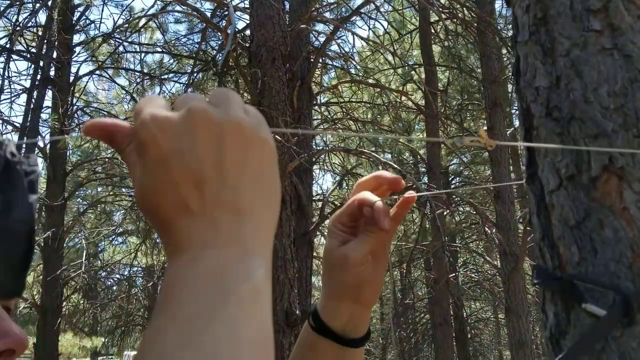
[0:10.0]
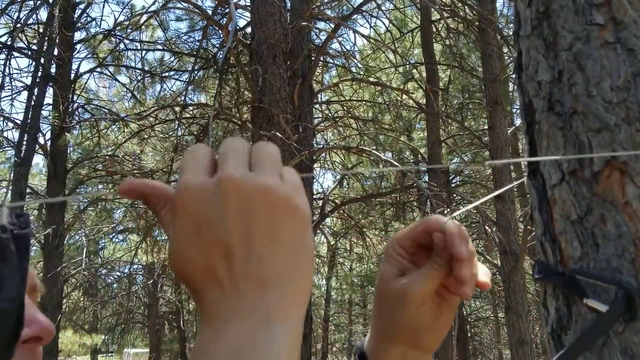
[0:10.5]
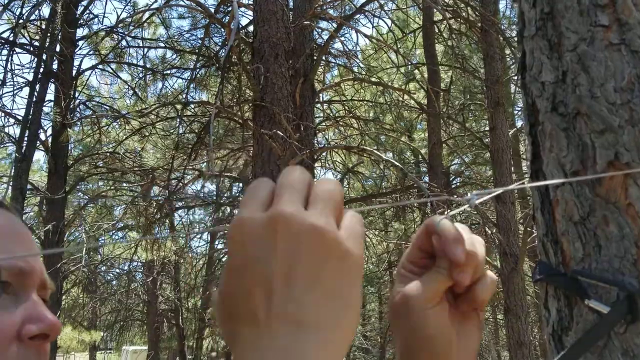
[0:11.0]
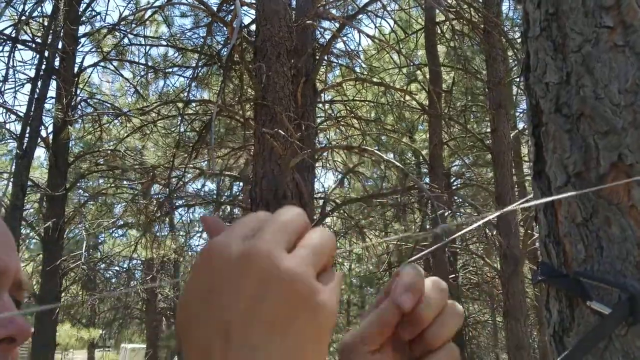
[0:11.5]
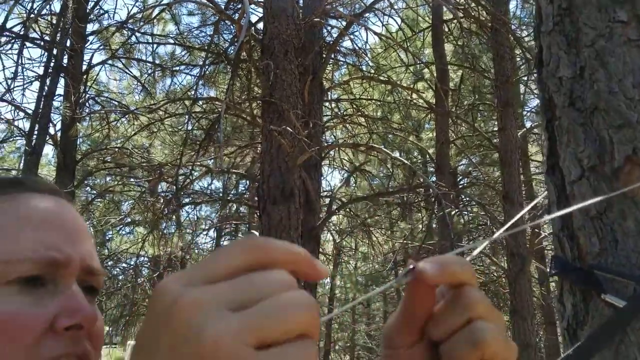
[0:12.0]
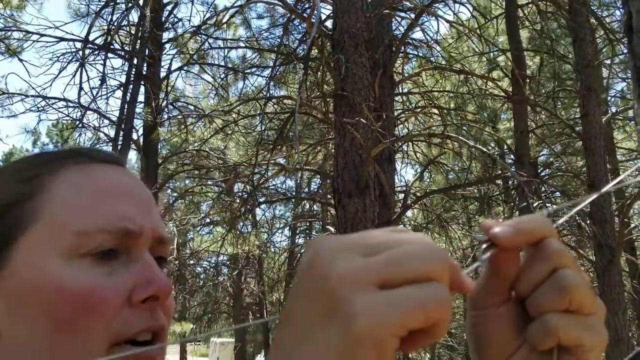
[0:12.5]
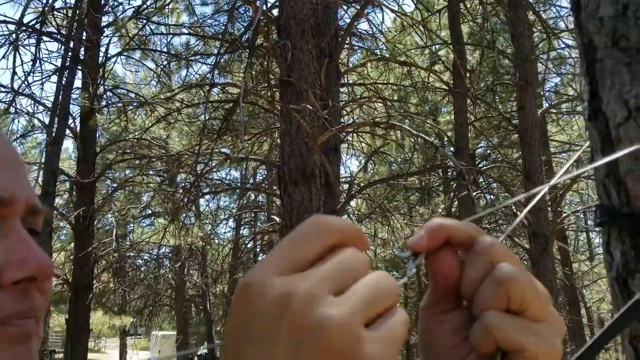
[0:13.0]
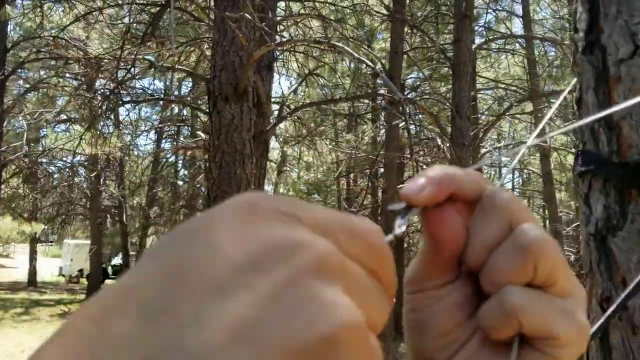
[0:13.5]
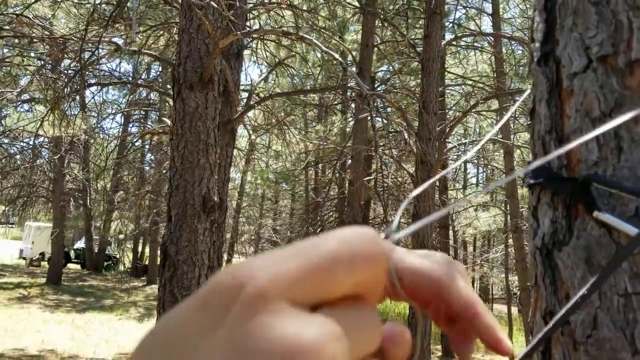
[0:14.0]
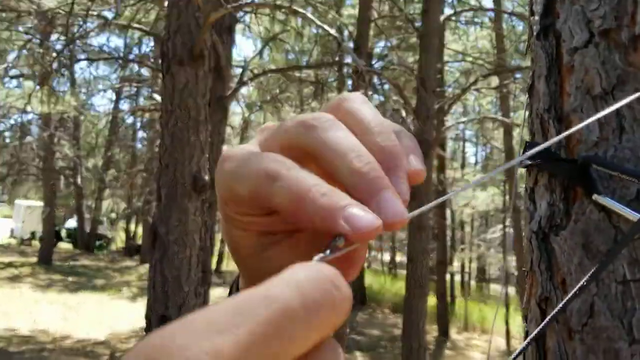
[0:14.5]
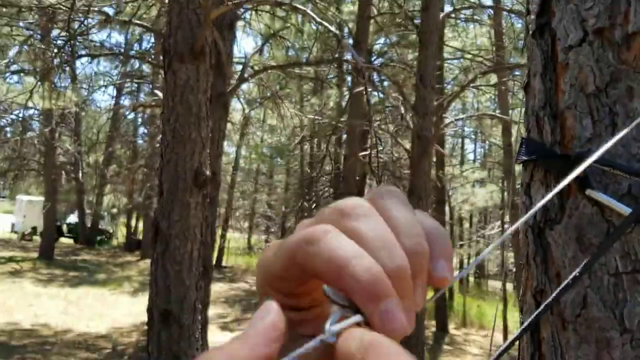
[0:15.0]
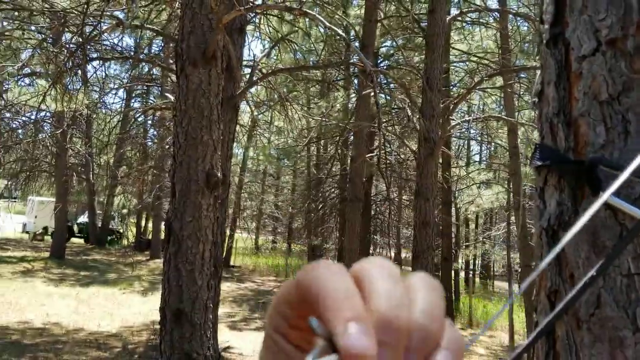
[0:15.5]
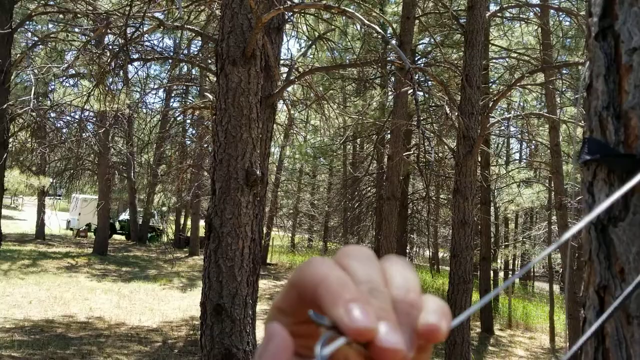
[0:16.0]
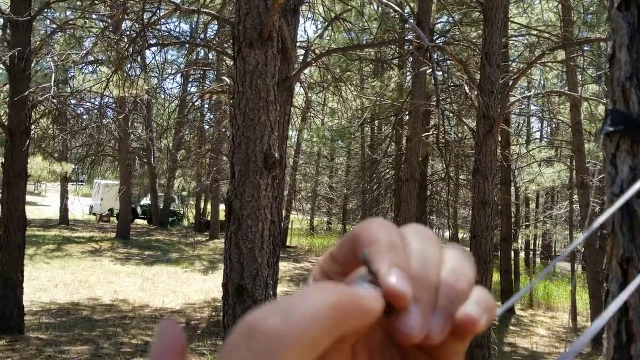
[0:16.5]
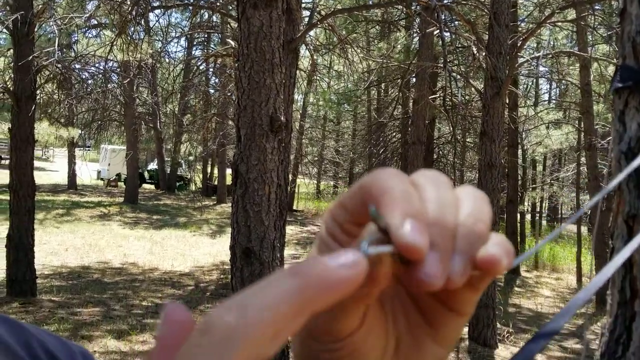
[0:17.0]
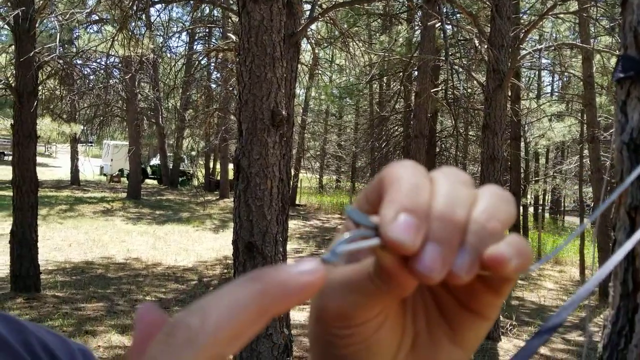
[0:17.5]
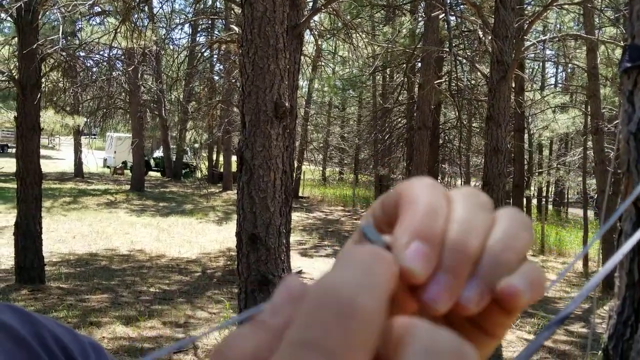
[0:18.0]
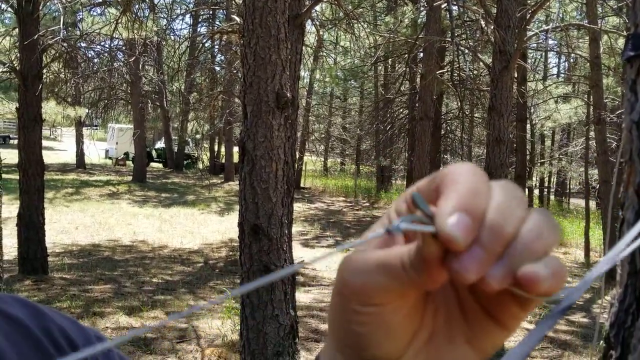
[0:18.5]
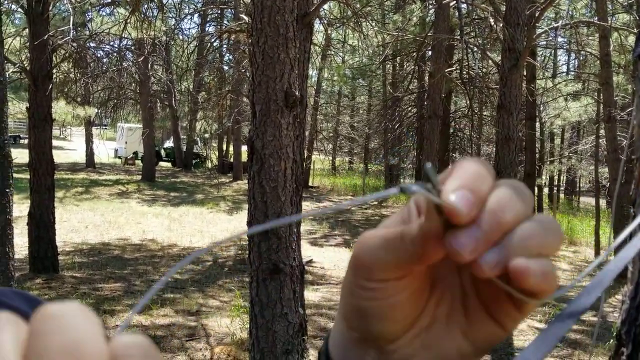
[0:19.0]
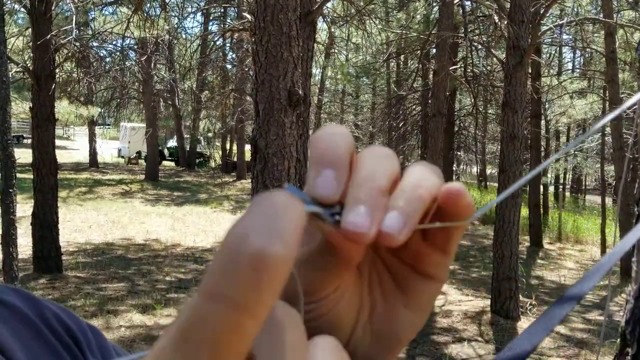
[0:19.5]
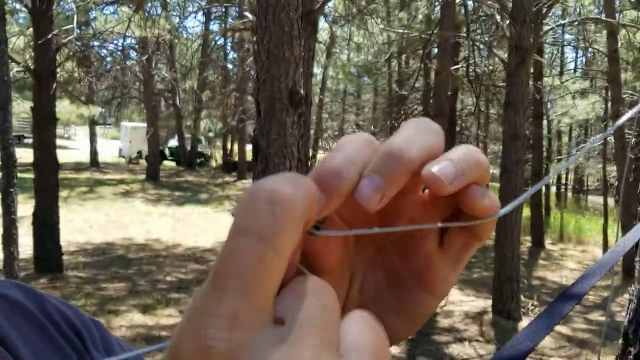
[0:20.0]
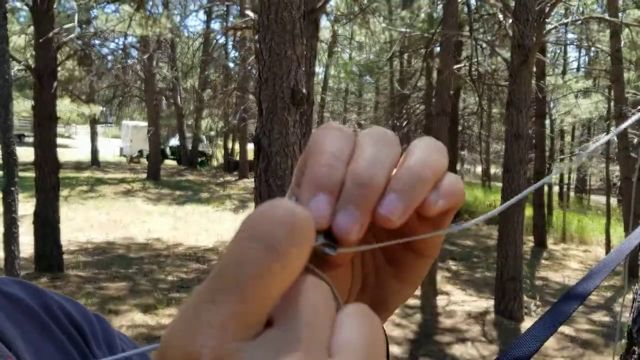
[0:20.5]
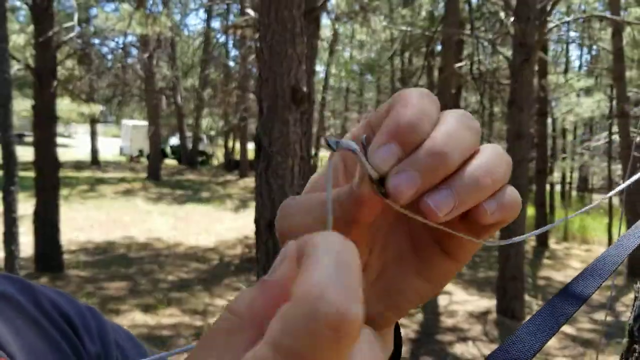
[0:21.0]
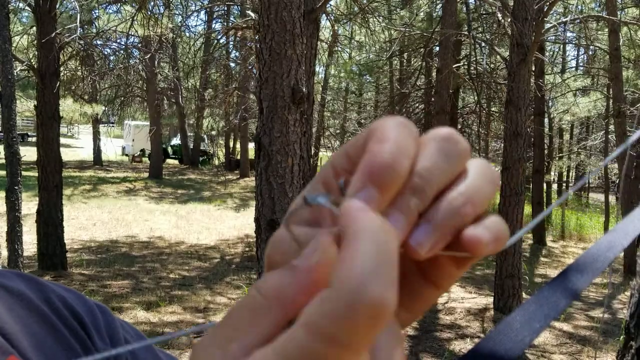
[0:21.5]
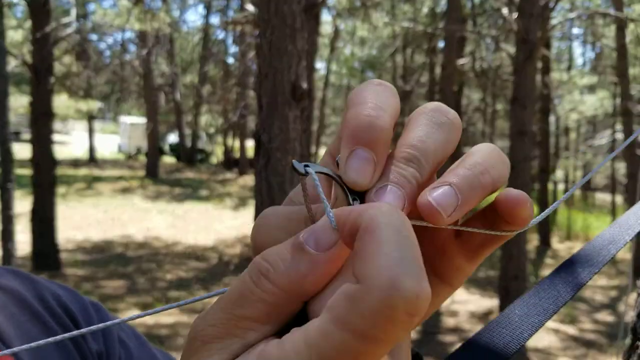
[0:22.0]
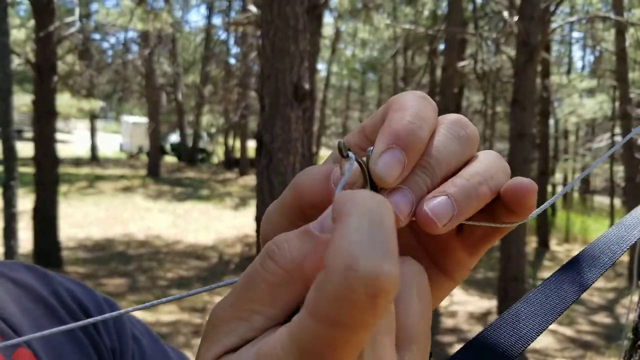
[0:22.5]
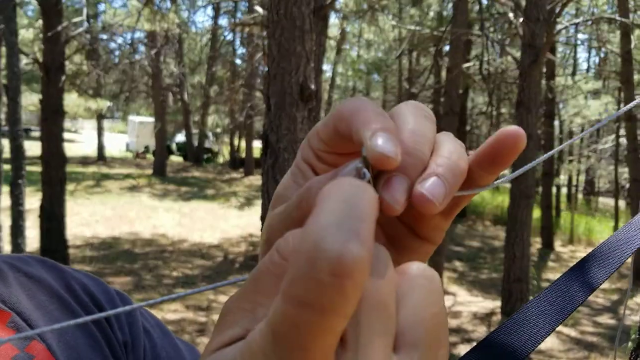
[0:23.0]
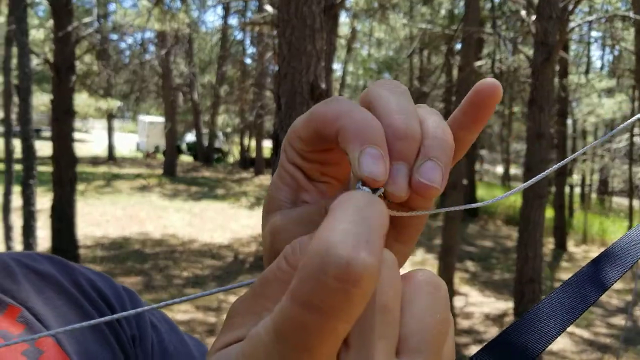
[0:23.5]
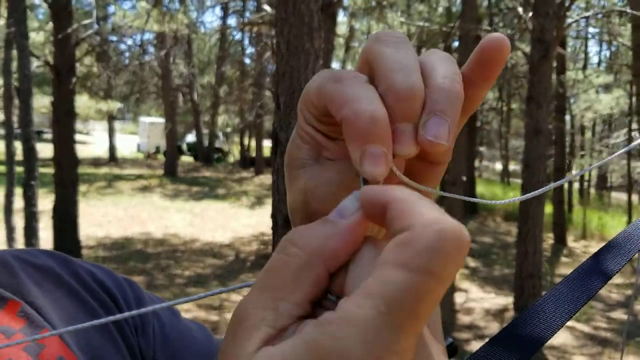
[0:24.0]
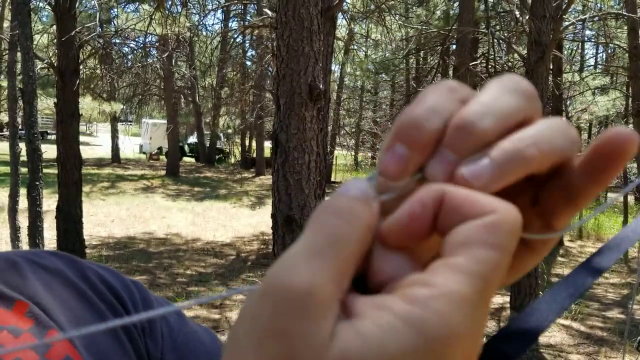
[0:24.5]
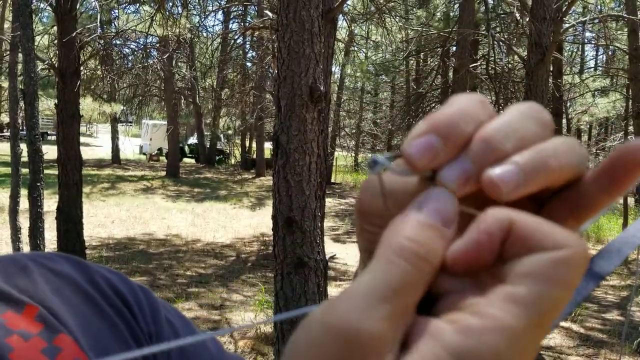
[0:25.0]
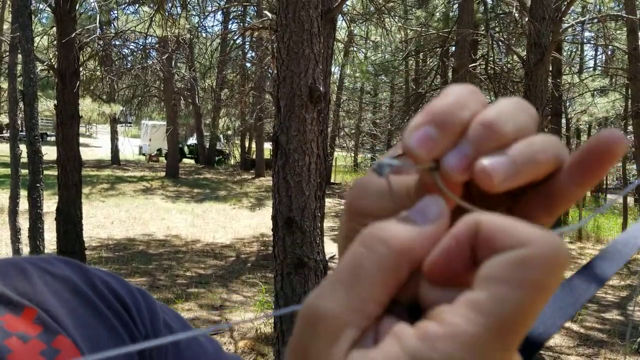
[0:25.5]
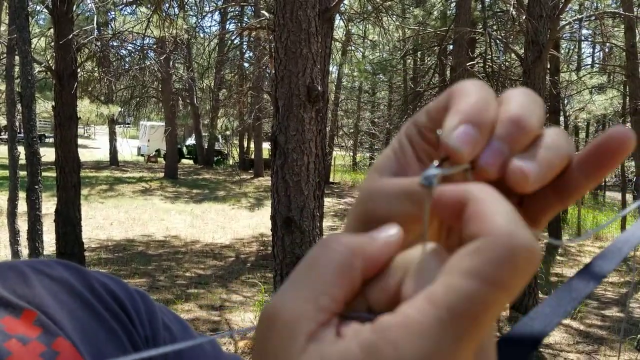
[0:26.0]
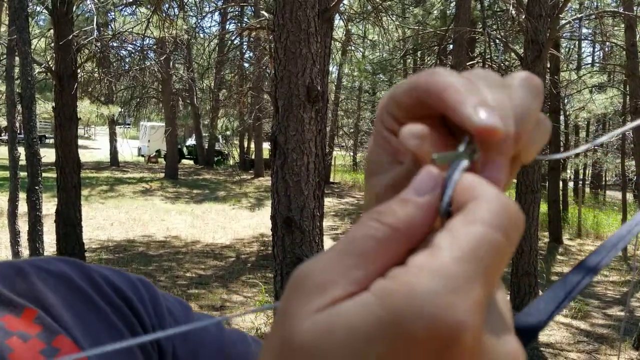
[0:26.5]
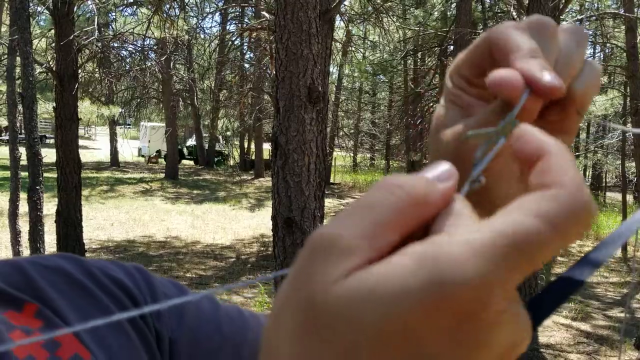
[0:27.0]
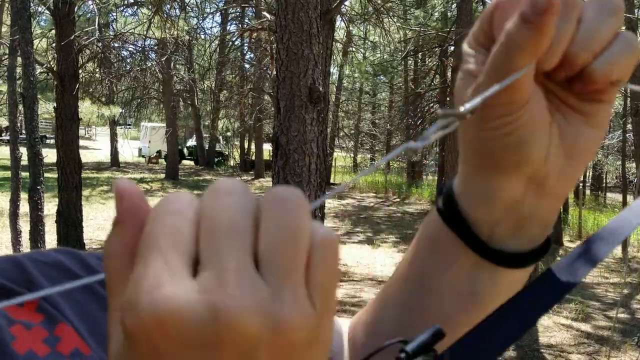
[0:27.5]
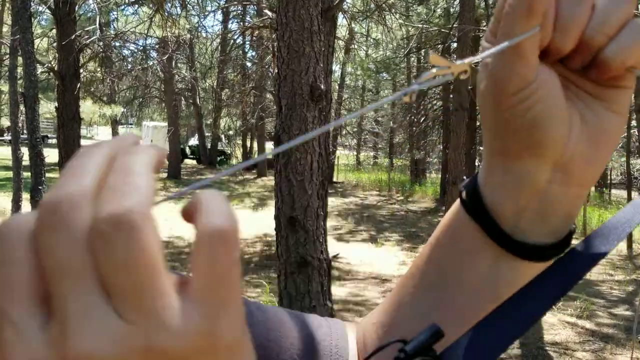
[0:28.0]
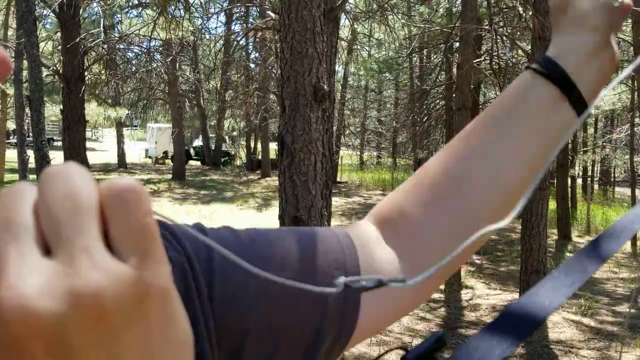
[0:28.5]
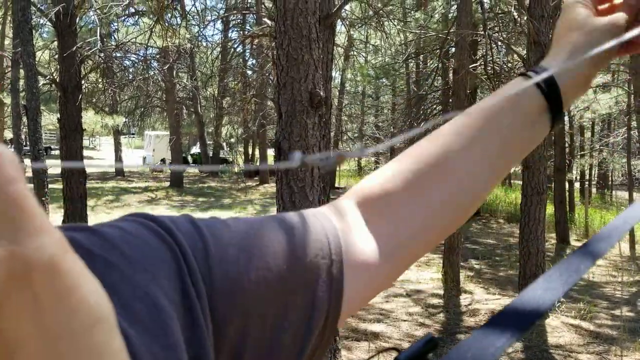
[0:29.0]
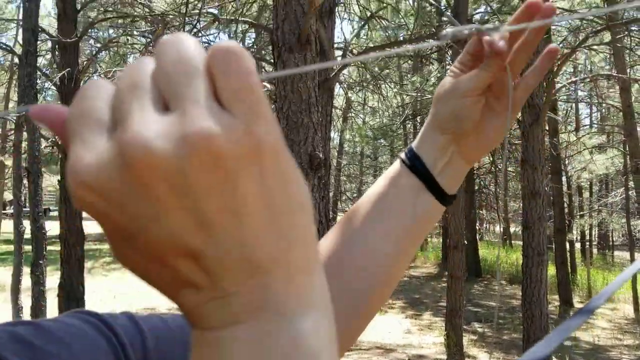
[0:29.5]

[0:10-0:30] The person uses the string device attached around the tree, though it is unclear whether it is some sort of saw or what exactly they are doing with it. They attach it to the tree, and there appears to be some sort of hook or something where they kind of double it over itself and tie it together, moving it around the tree trunk as they tie it. They kind of move in a sawing motion, so it is unclear whether it is a saw or whether they are just positioning it where they want it. It is hard to tell whether it is more of a string or a cable; it is possibly metal, and it is quite thin, not like a thick rope. They appear to be moving it around, maybe getting it into position.